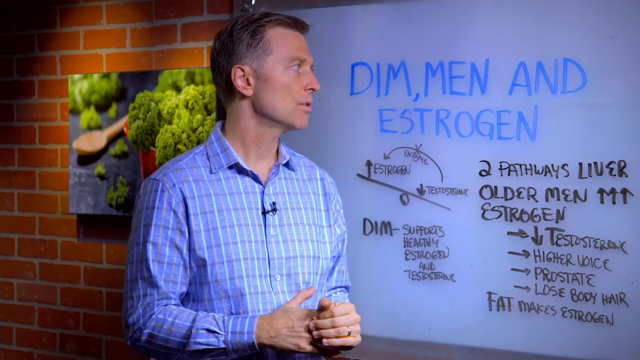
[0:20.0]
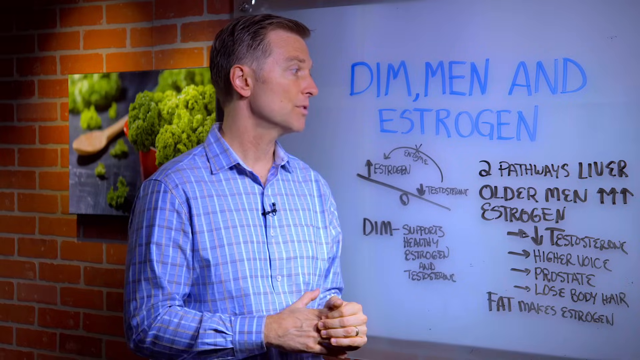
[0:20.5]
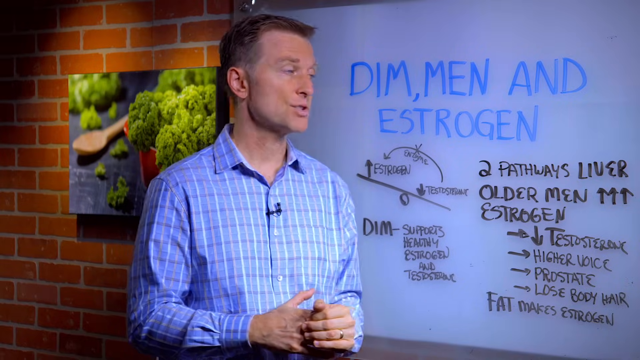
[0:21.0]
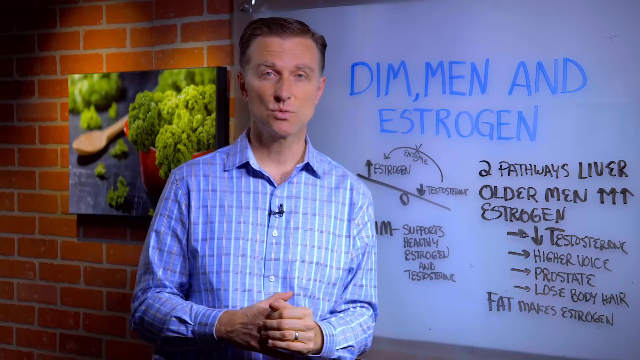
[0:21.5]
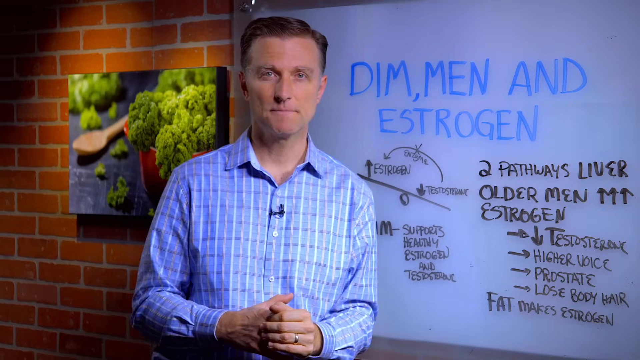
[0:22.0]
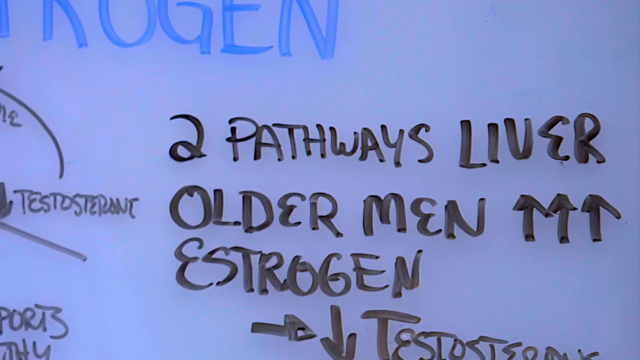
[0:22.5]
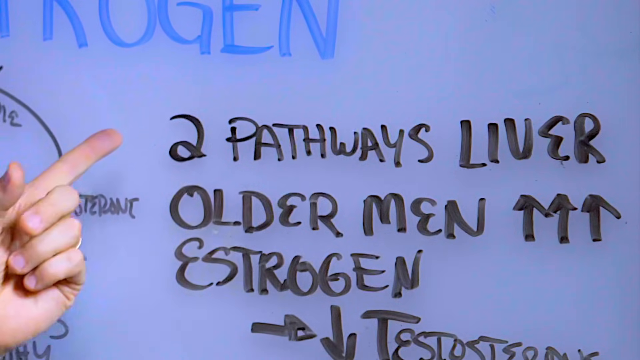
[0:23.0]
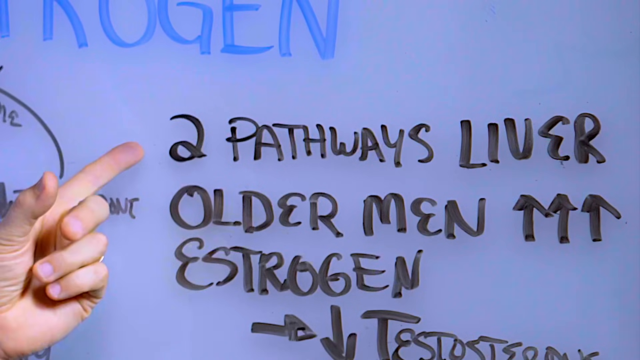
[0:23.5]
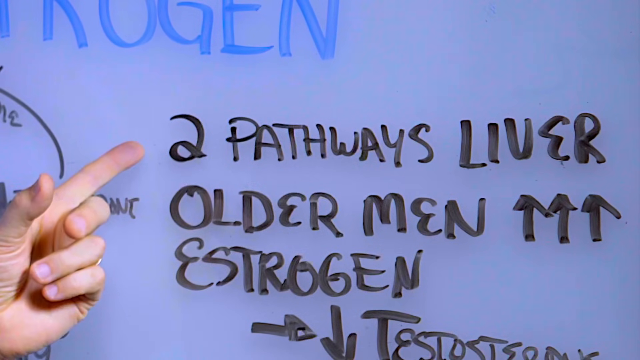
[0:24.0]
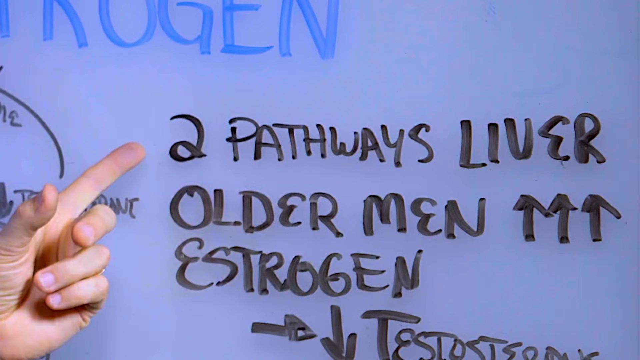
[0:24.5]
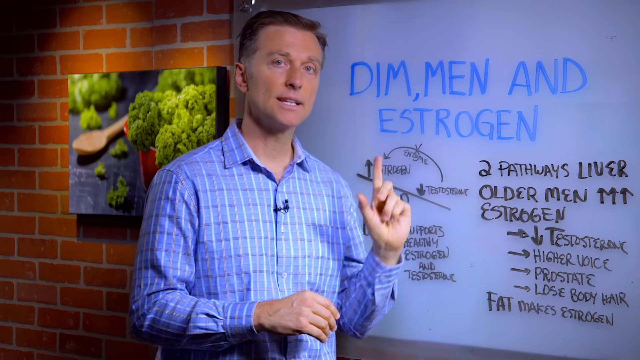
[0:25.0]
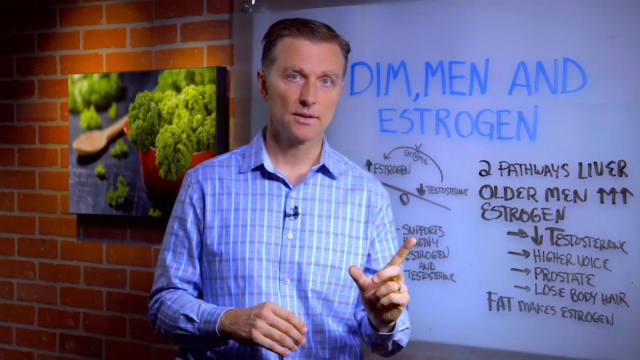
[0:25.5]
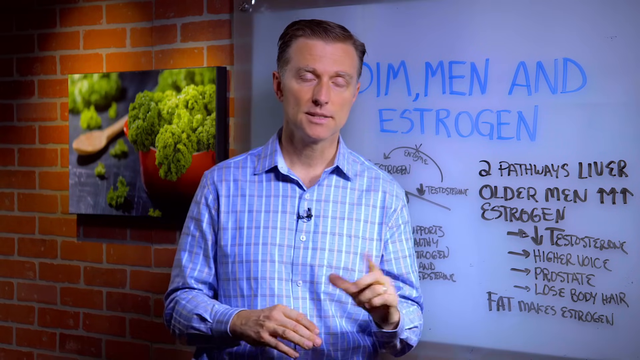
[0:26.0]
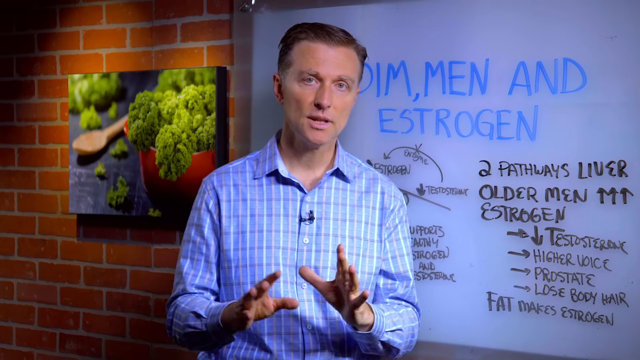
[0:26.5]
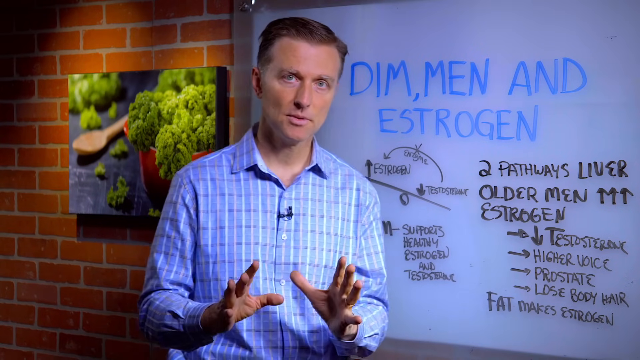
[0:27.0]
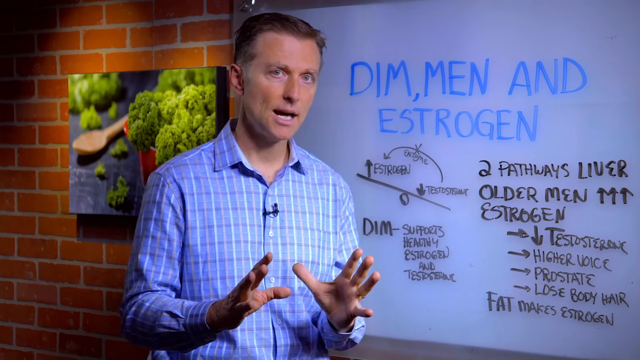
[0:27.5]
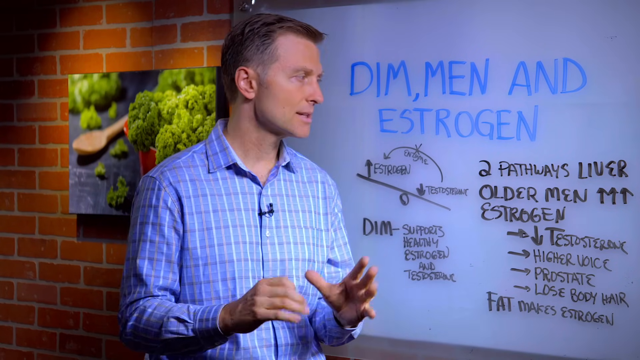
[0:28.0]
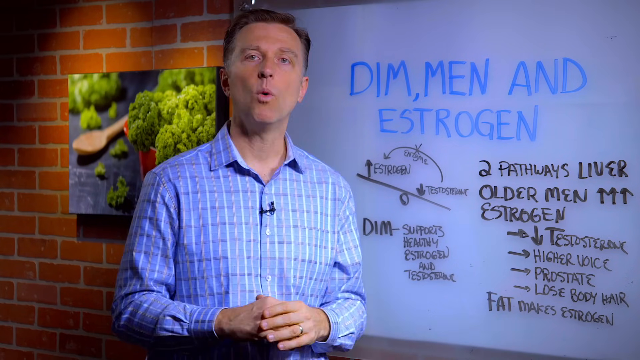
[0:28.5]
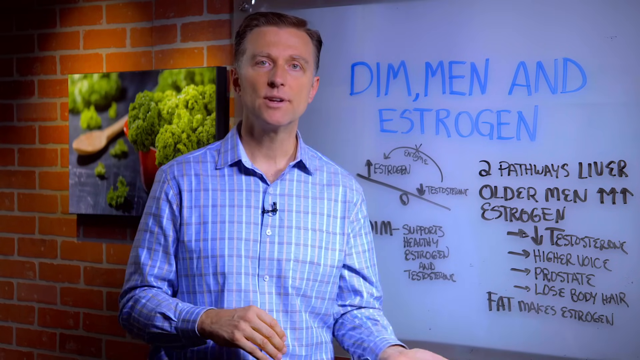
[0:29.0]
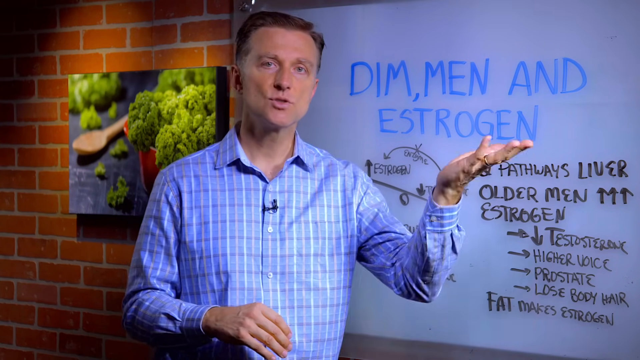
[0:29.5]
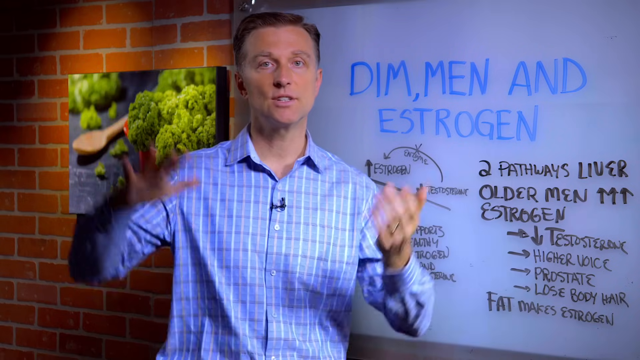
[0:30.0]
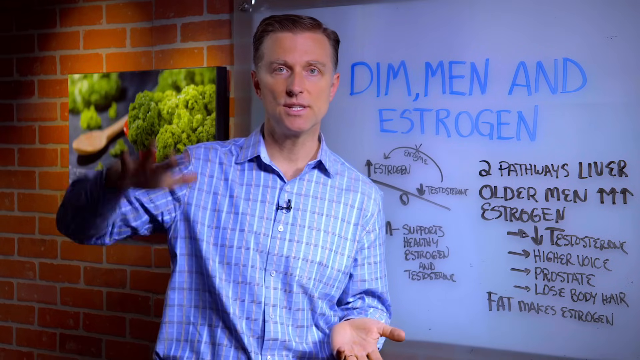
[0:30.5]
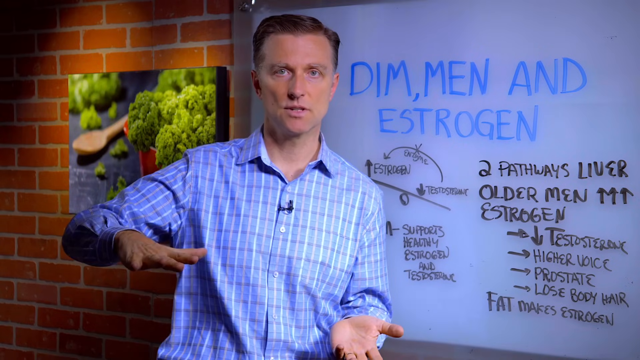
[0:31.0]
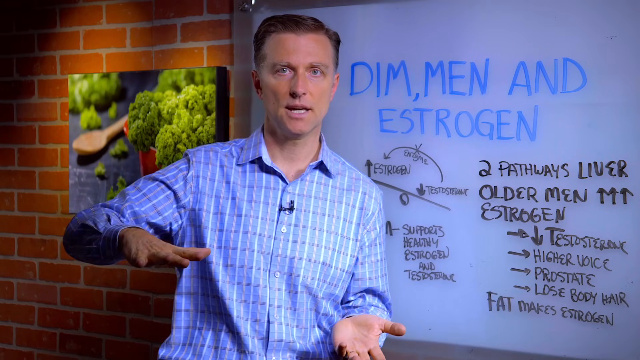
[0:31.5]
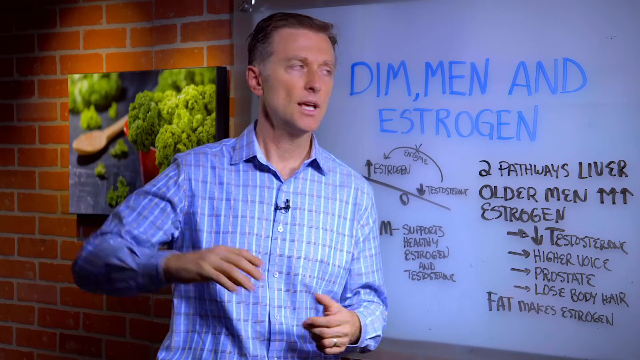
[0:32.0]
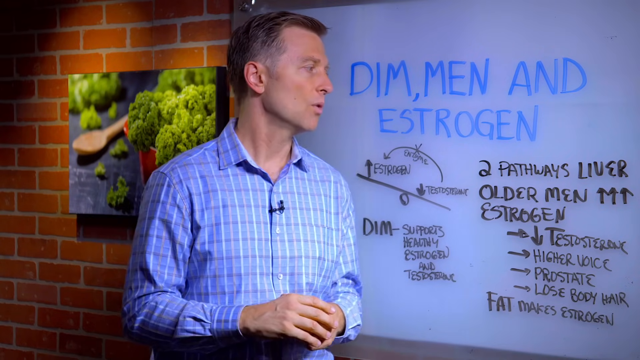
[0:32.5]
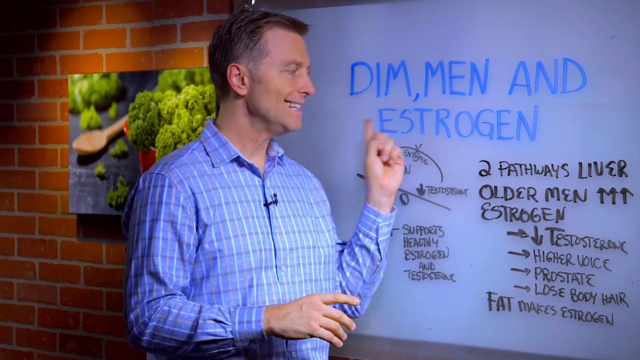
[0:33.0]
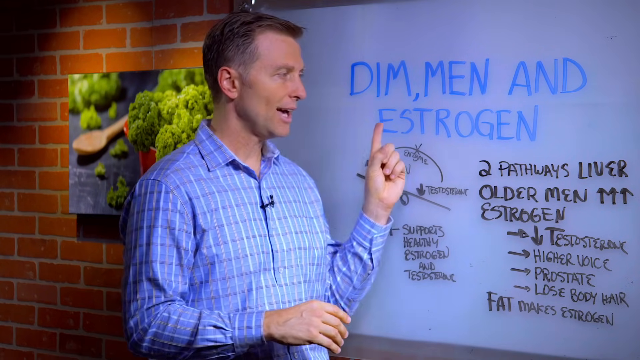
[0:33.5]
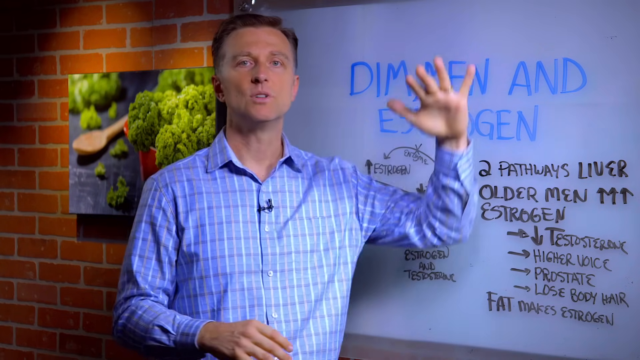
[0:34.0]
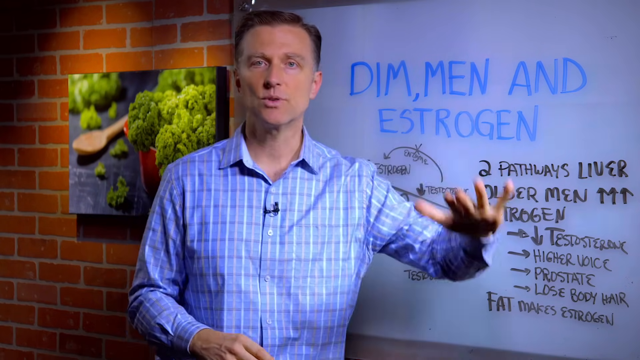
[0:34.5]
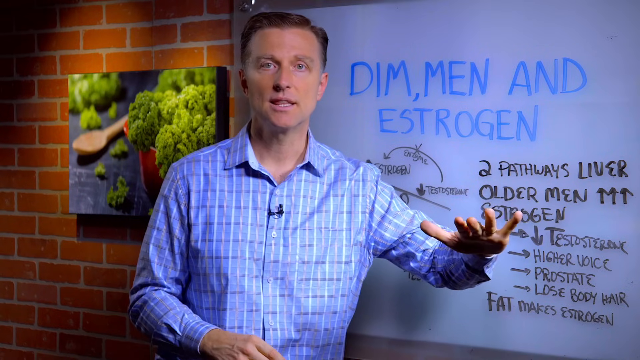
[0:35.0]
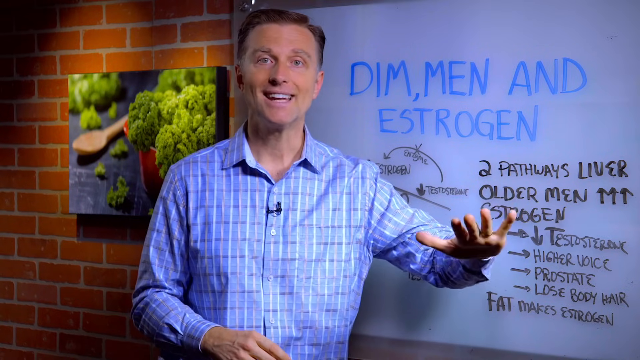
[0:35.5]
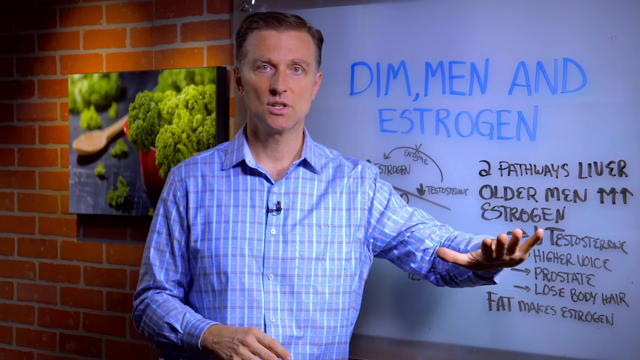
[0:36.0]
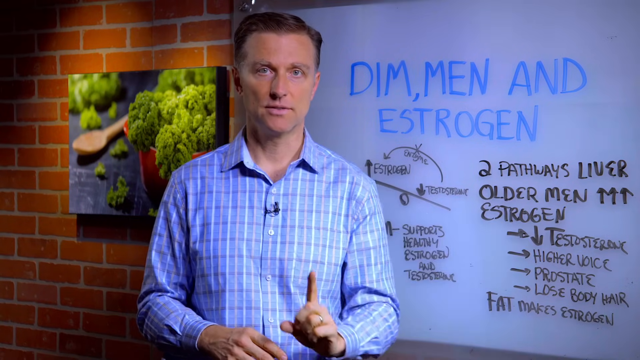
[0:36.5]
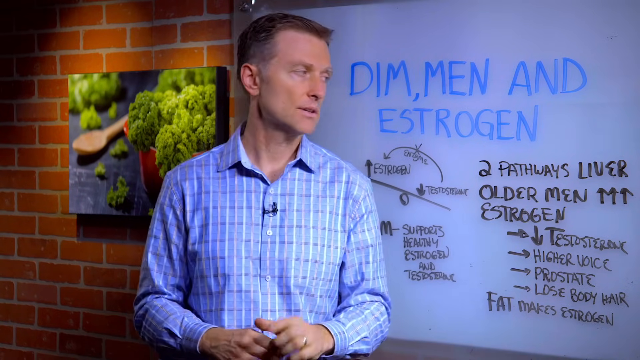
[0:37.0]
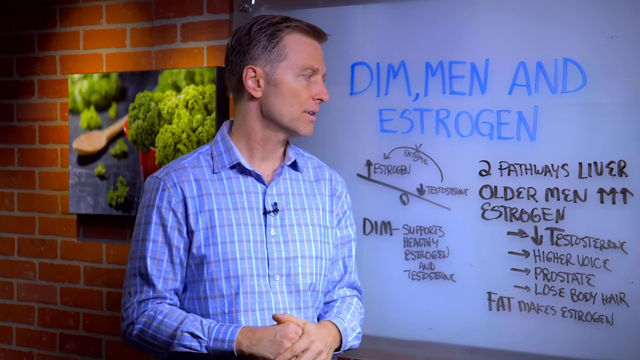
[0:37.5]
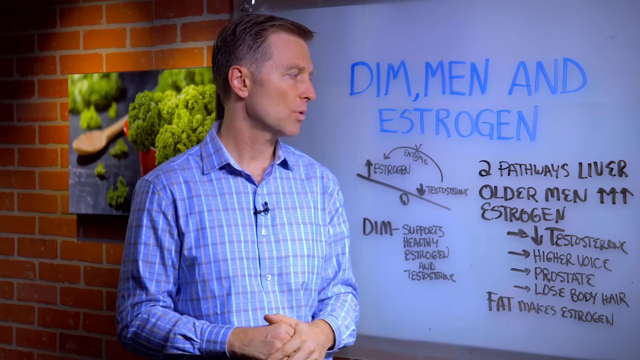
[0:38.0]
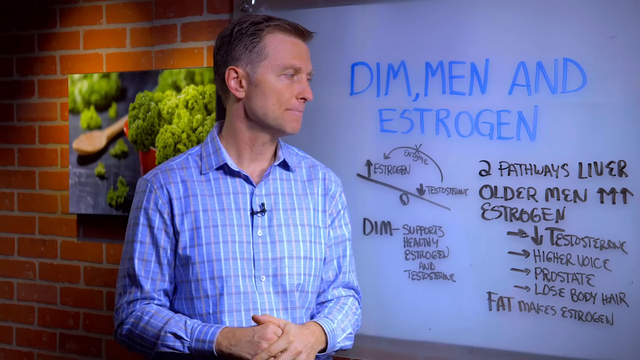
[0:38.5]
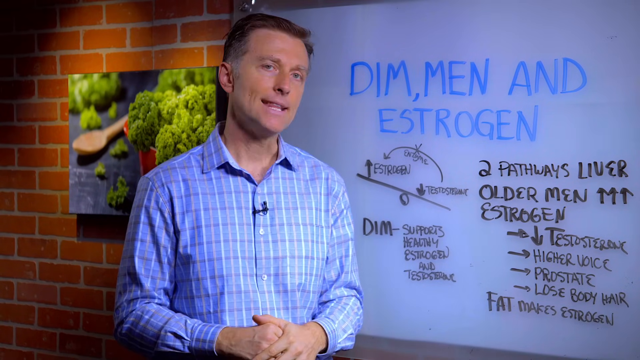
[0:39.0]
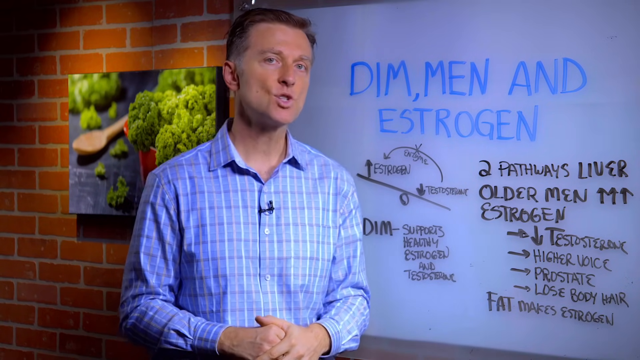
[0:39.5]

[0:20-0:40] A man in a blue plaited shirt, with a small black microphone clipped to his shirt, talks into the camera, his hands moving slightly as he speaks. The whiteboard behind him has the words "DIM, MEN, and ESTROGEN," with more information written below in black. The camera zooms in to an area of the board where the man's hand is pointing; it says "2 Pathways Liver, Older Men," followed by some arrows pointing upward and "estrogen." The video then goes back to the man talking, using his hands as though describing things being higher and lower as they move up and down. At times he looks over at the whiteboard beside him.